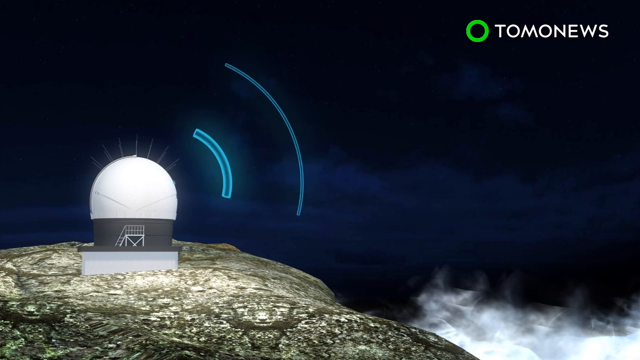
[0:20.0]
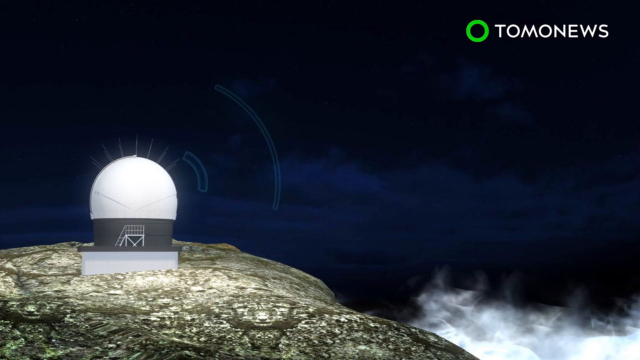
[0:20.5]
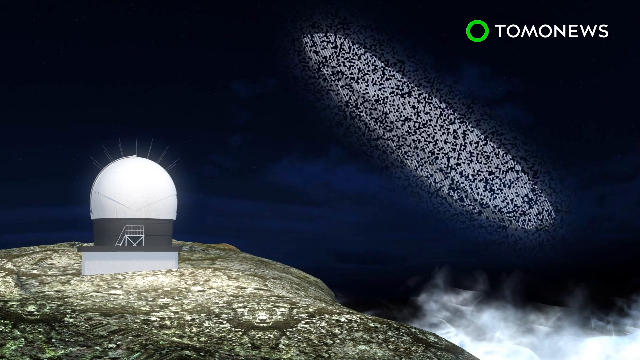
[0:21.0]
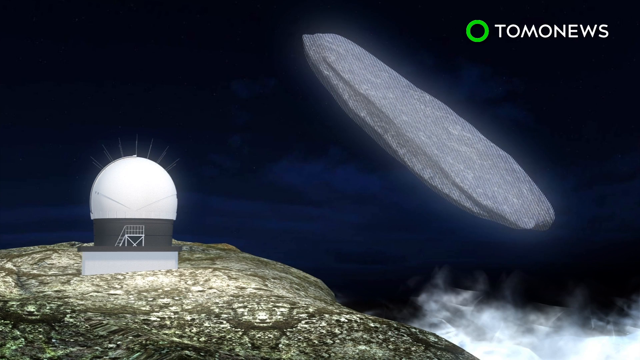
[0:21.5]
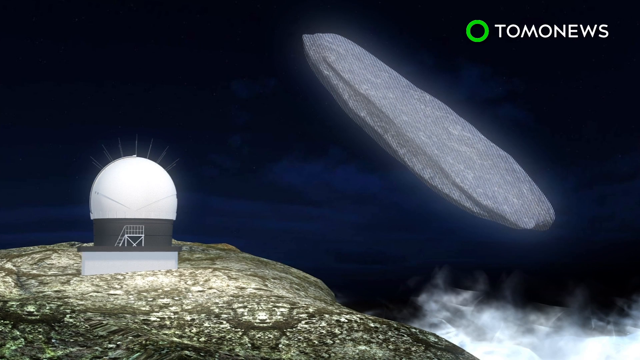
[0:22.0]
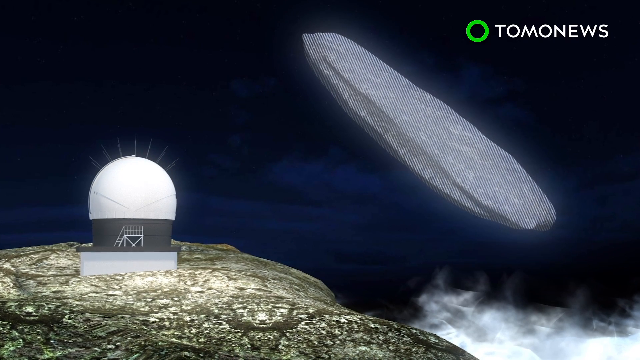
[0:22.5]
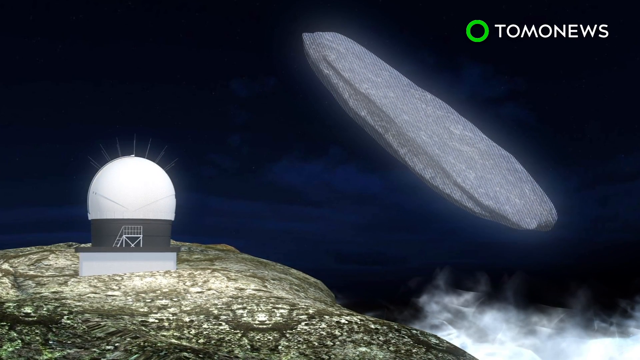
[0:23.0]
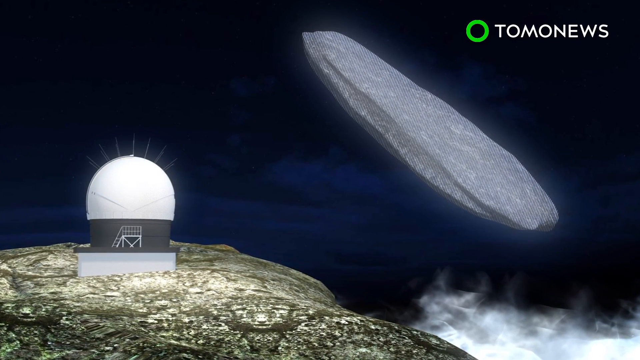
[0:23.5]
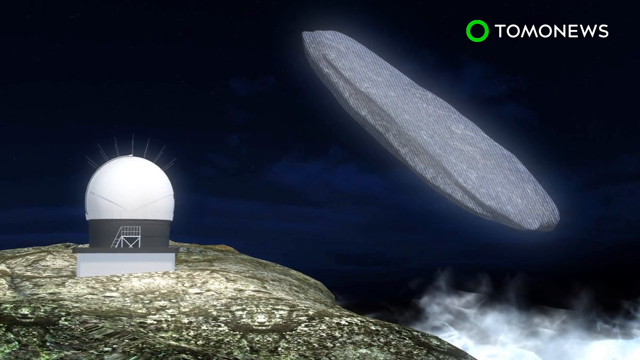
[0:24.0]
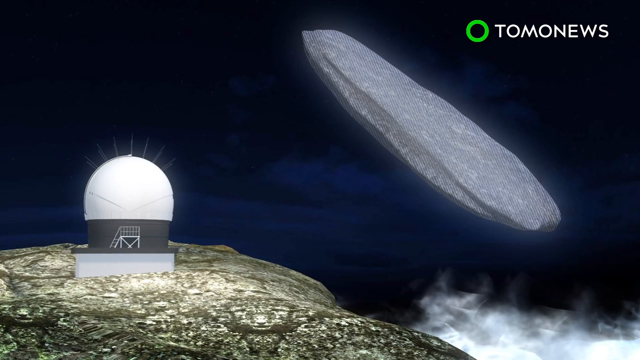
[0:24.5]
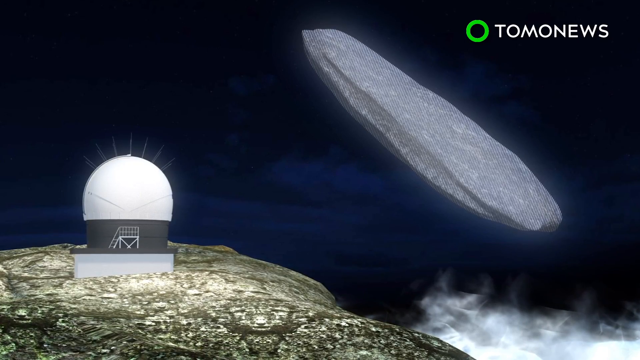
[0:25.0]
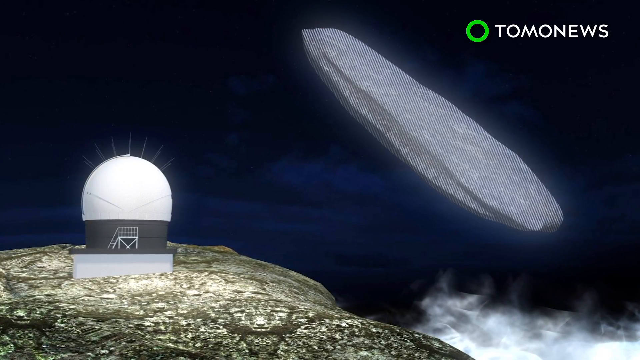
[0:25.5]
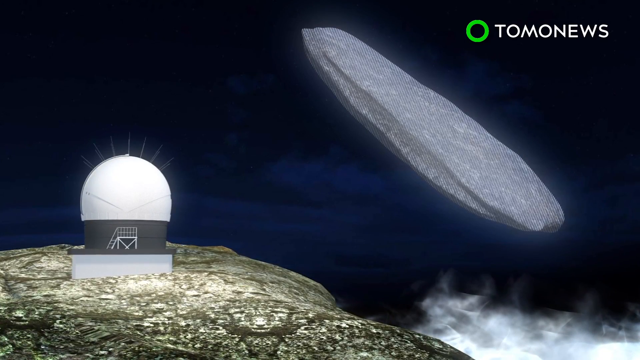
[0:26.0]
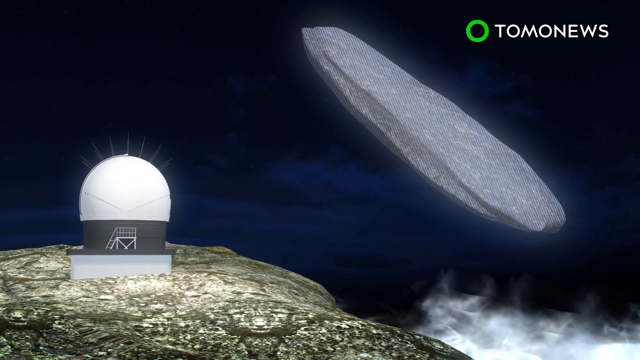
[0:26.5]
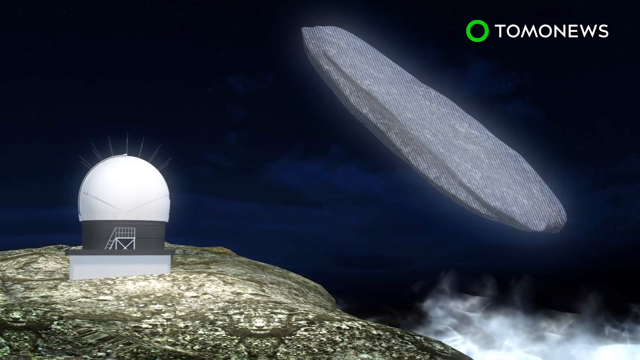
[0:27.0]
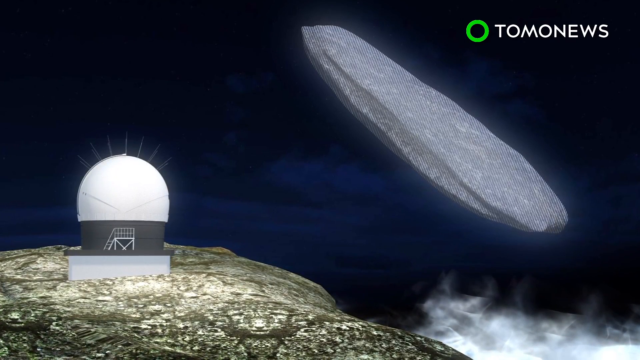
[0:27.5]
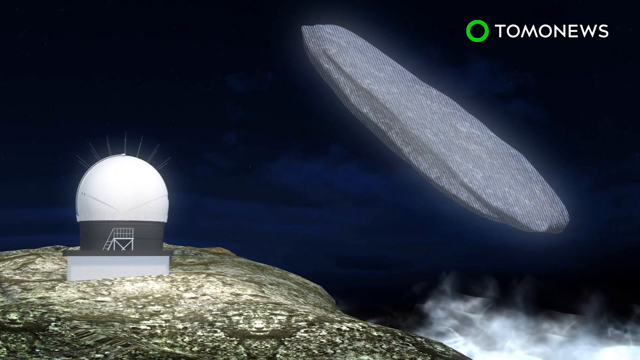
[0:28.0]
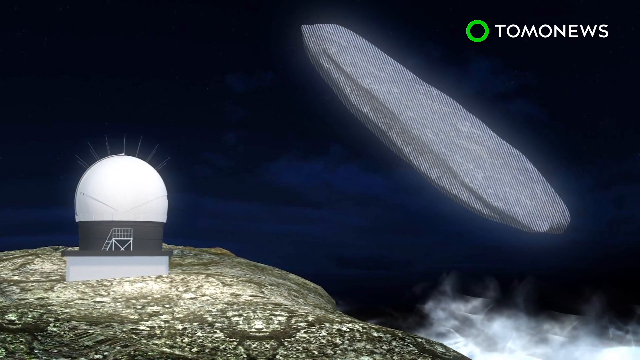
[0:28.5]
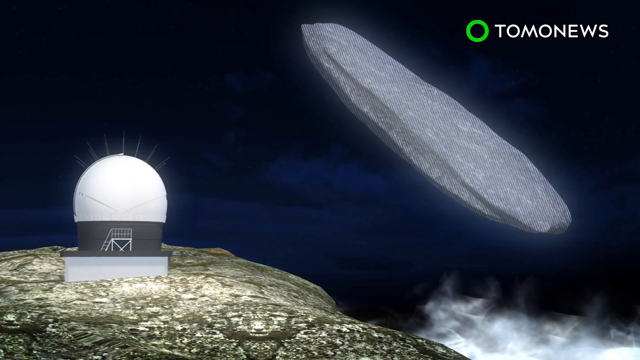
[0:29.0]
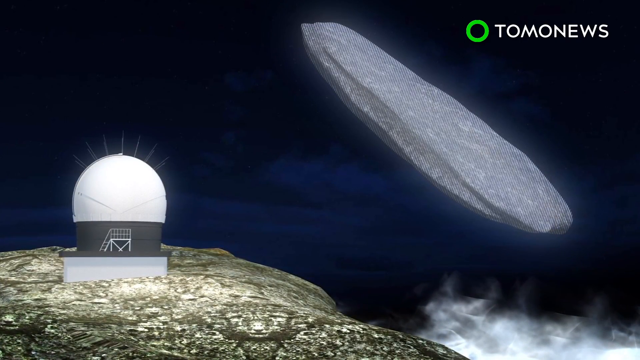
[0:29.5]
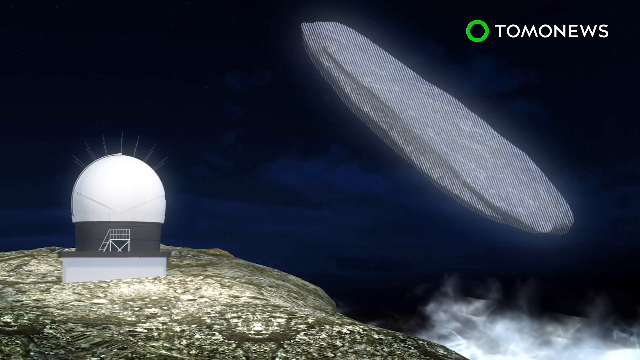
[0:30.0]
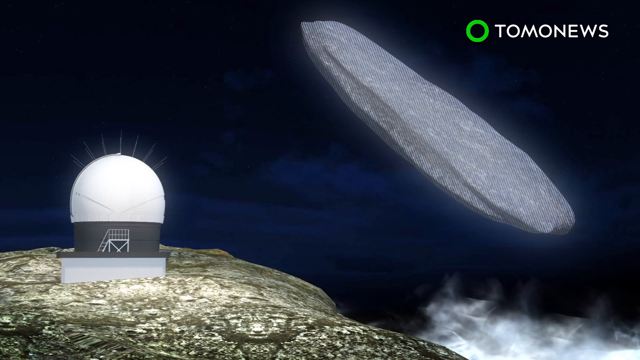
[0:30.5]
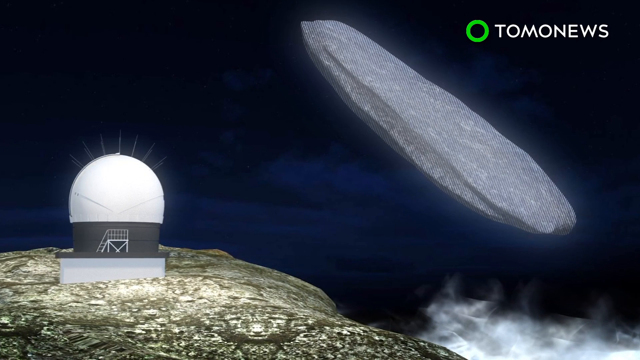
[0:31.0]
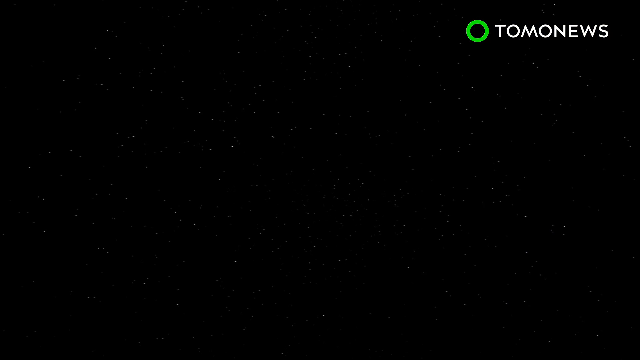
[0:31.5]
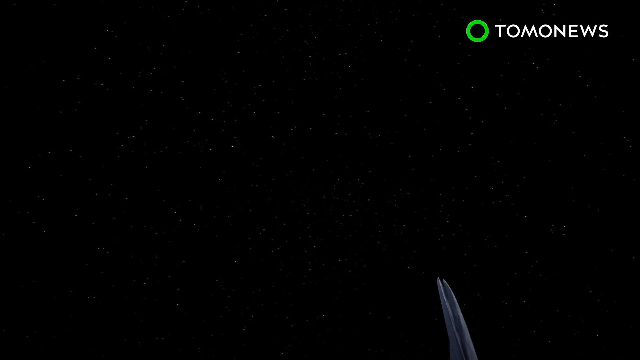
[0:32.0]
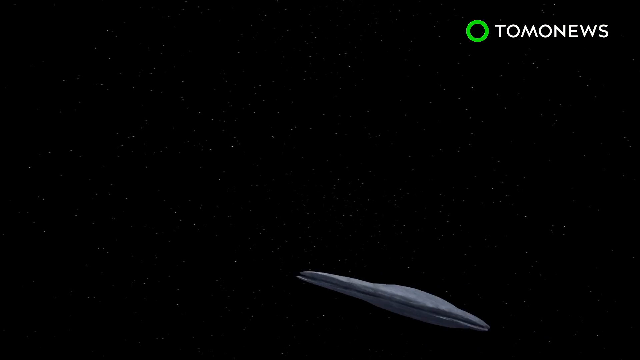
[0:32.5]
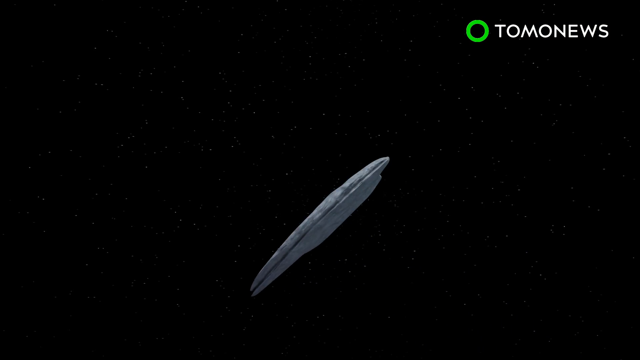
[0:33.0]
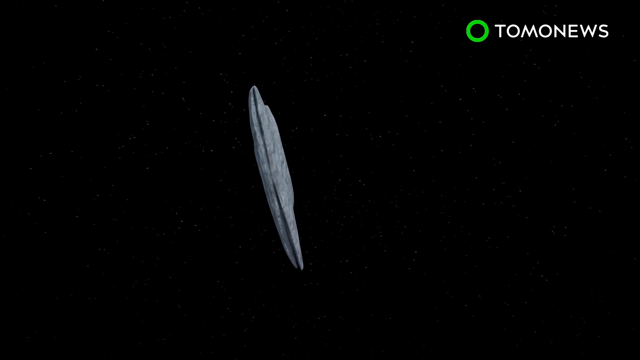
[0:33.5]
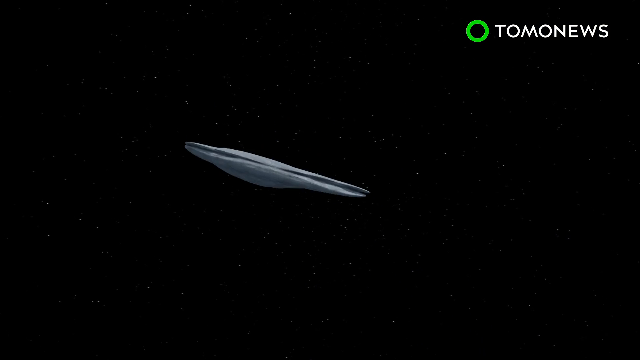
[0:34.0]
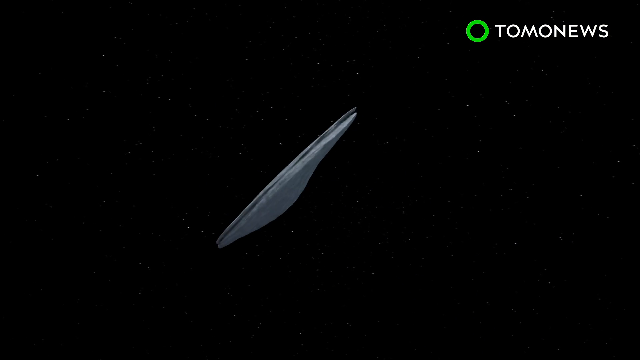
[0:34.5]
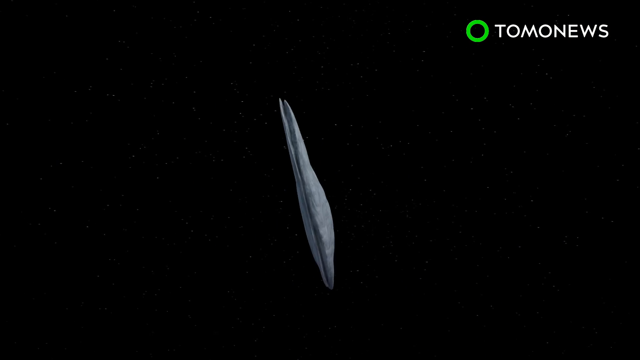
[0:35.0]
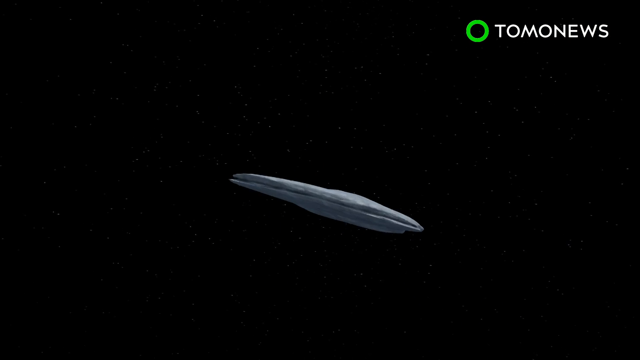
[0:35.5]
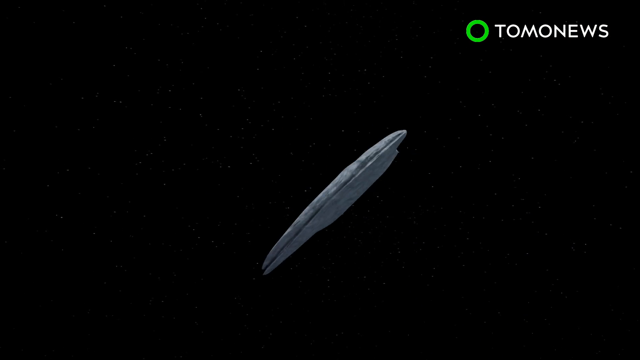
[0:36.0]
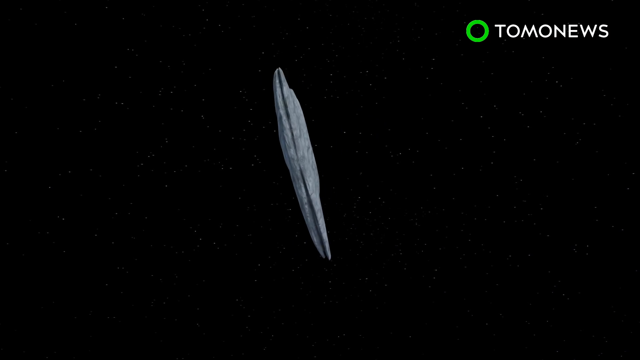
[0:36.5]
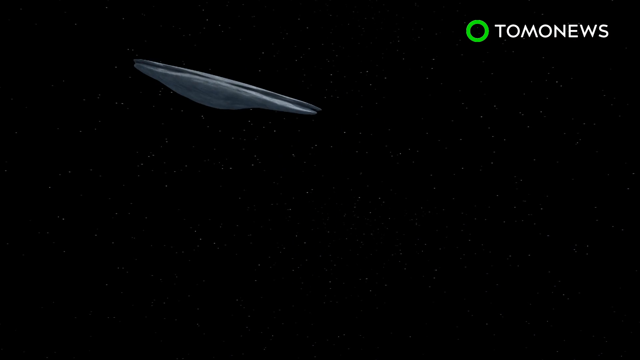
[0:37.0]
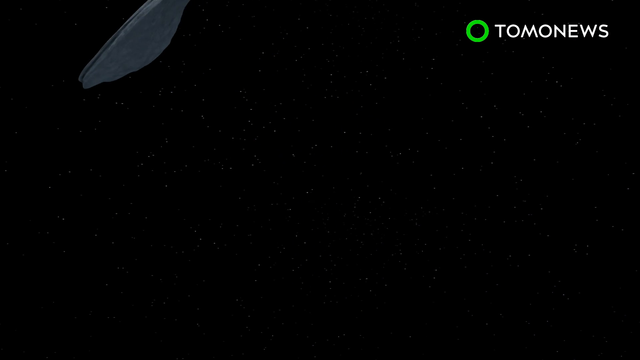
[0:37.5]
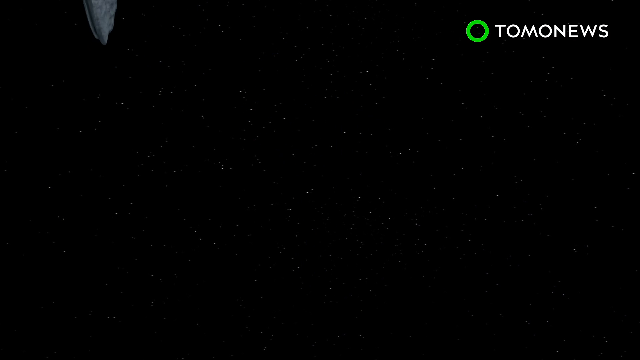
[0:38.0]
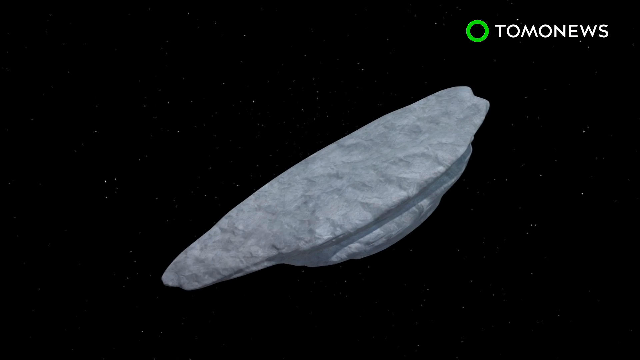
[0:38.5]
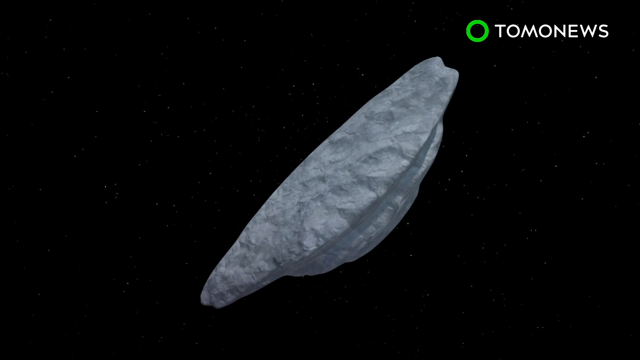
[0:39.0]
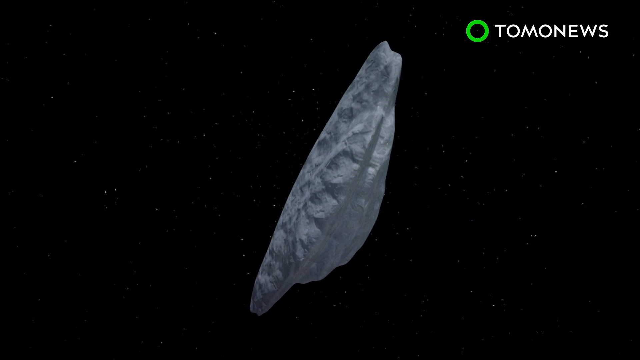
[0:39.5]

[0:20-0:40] At the bottom left is a building-like structure with a black wall and a white, sort of ball-shaped top. It appears to have pulse waves coming from it, aimed at the top right of the sky. Below the building is a light brownish rock surface, and the background is a very dark night sky. The words "TOMO news" appear at the top right. An object appears in the image along a diagonal running from top left to bottom right; at the top right, a large, oval, gray rock simply appears in the sky. The shot holds on this image before switching to a scene in space, with a very dark black background and many tiny white dots forming stars. The large stone structure seen earlier moves through the sky in a counterclockwise motion toward the top left of the frame. The scene then changes to a close-up shot of the stone-looking object in the sky.